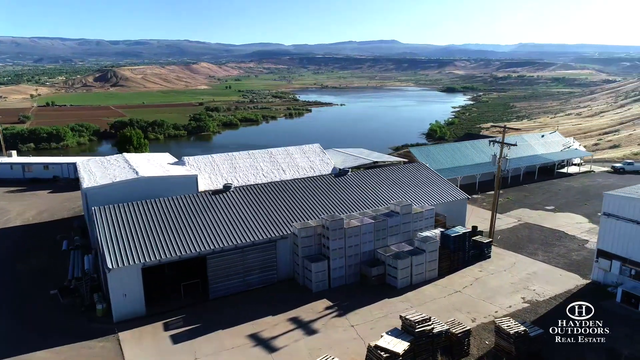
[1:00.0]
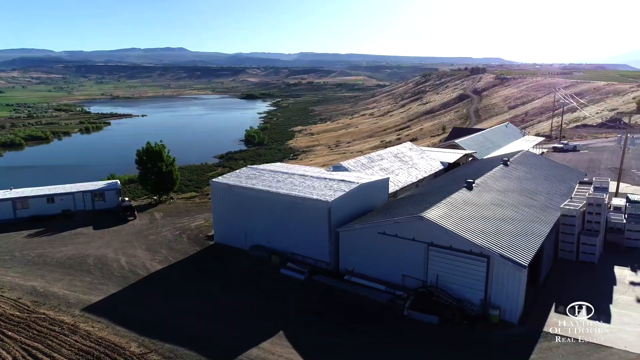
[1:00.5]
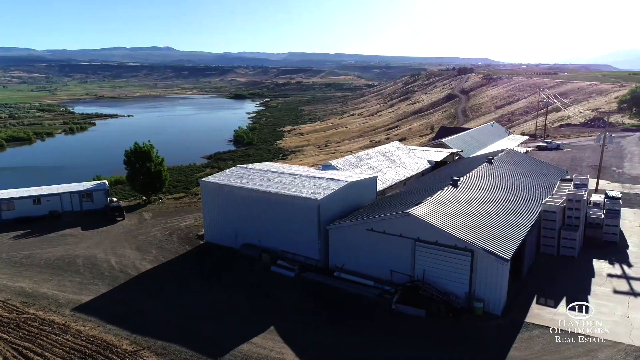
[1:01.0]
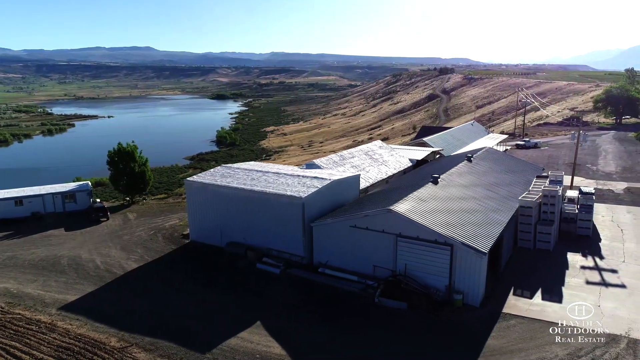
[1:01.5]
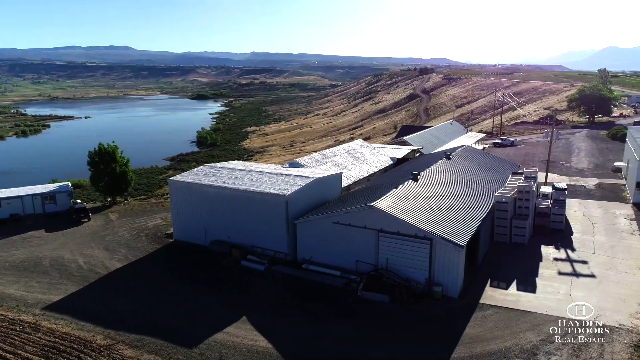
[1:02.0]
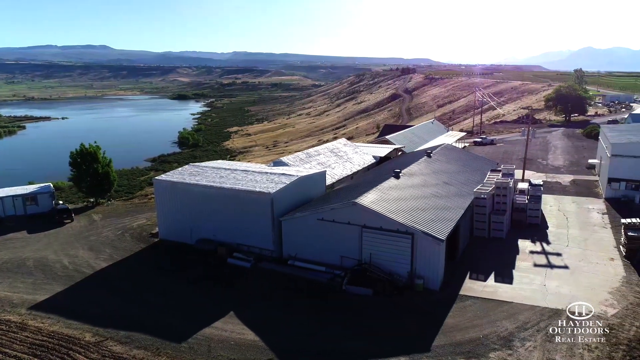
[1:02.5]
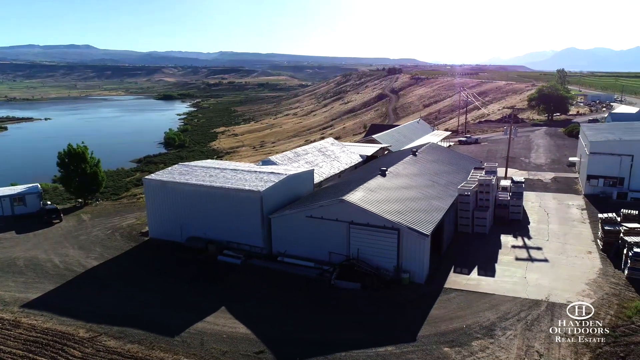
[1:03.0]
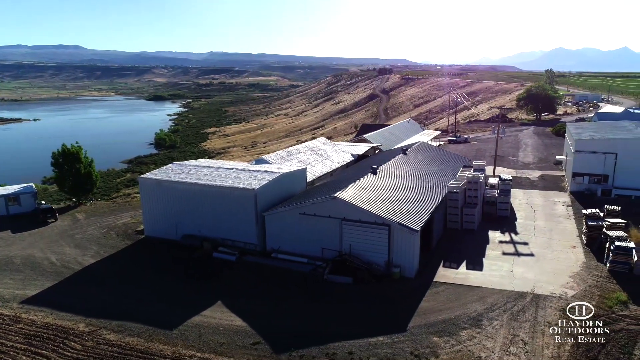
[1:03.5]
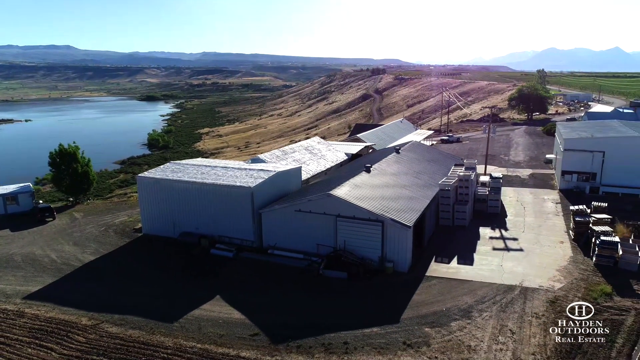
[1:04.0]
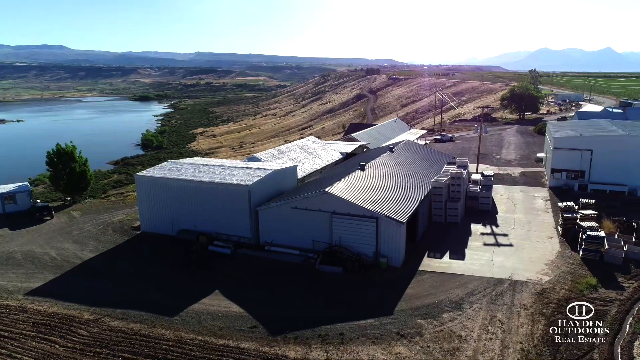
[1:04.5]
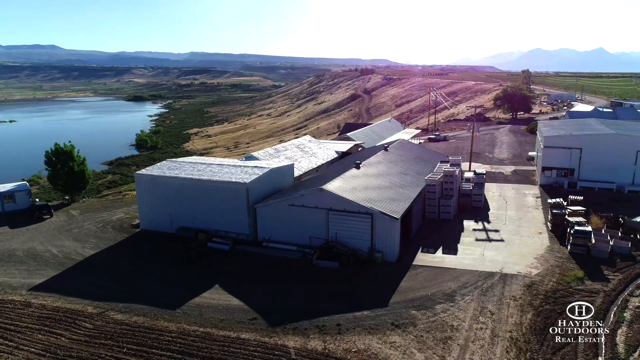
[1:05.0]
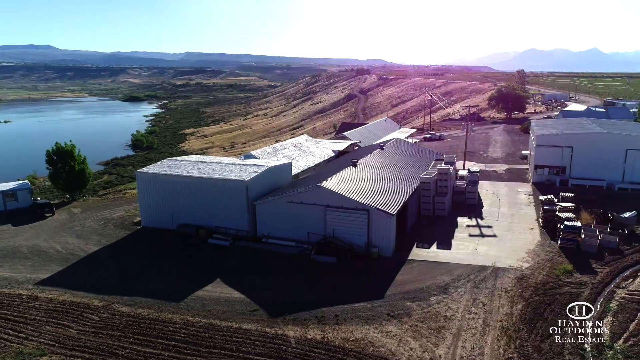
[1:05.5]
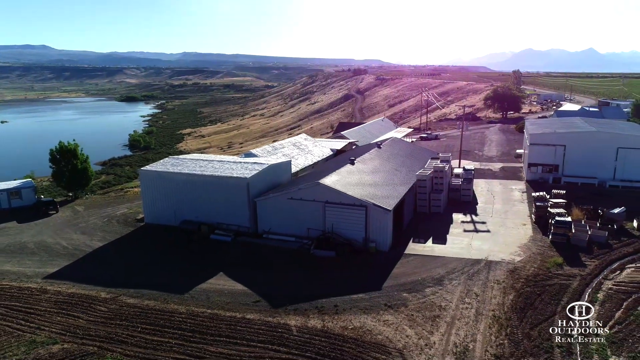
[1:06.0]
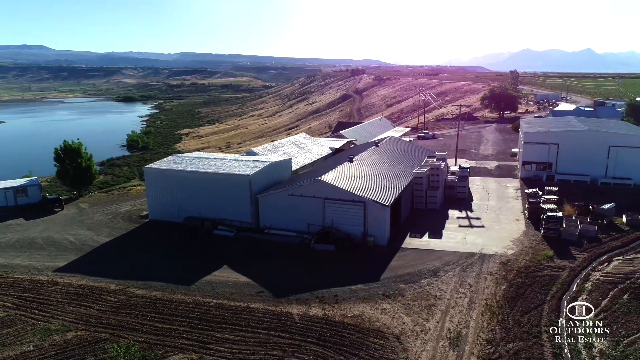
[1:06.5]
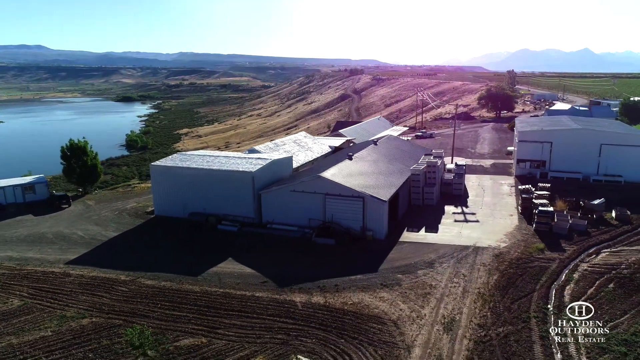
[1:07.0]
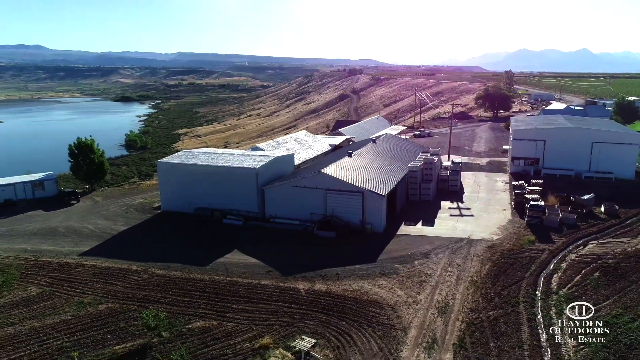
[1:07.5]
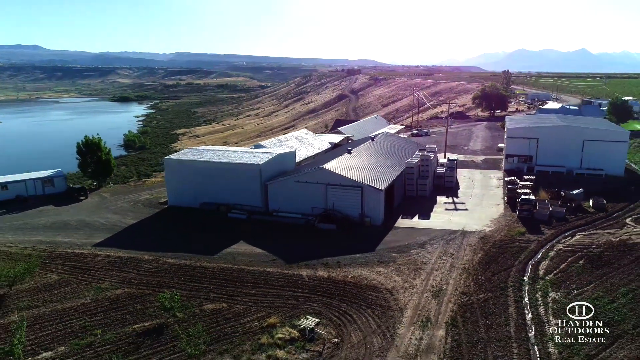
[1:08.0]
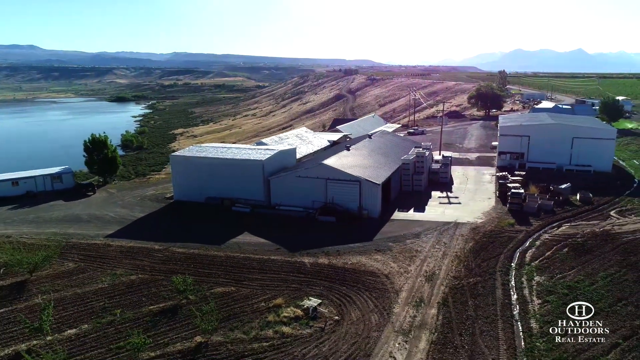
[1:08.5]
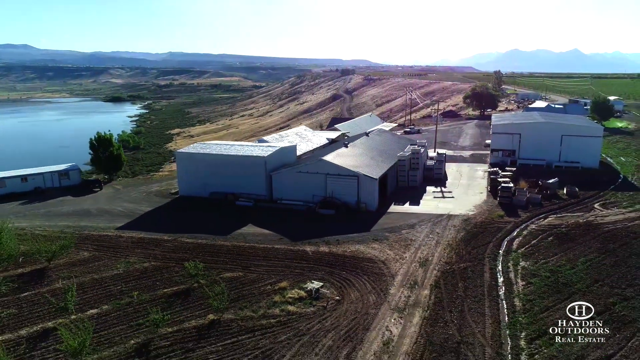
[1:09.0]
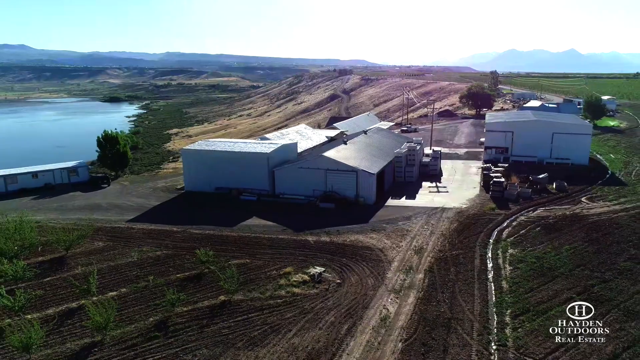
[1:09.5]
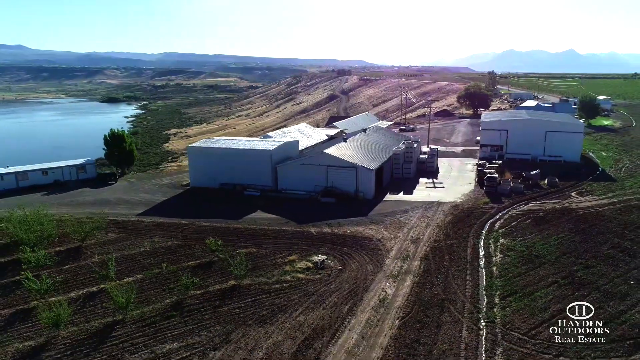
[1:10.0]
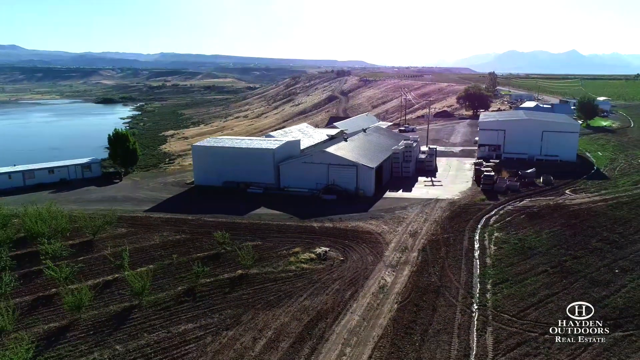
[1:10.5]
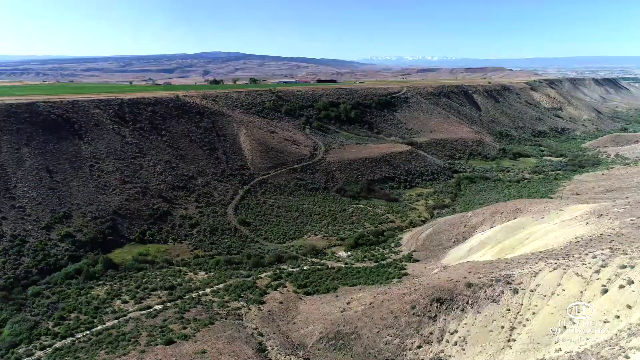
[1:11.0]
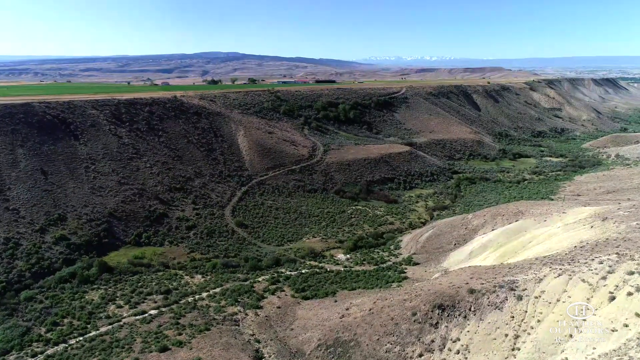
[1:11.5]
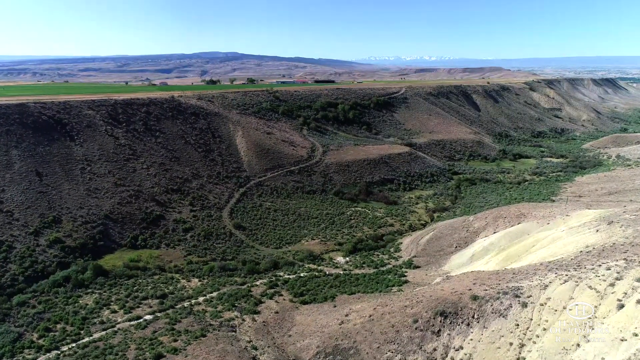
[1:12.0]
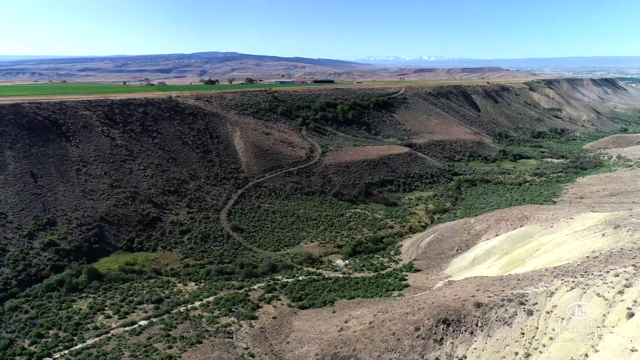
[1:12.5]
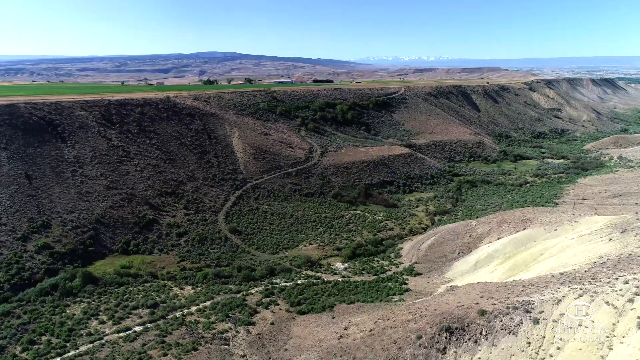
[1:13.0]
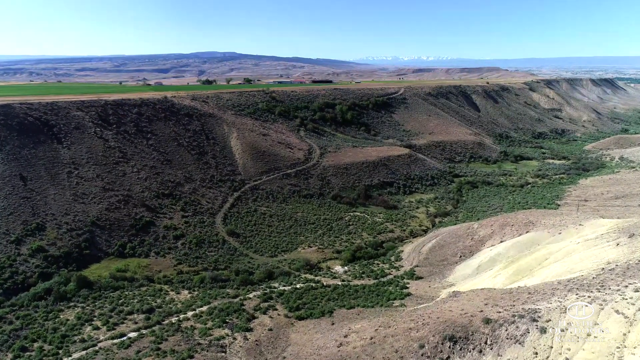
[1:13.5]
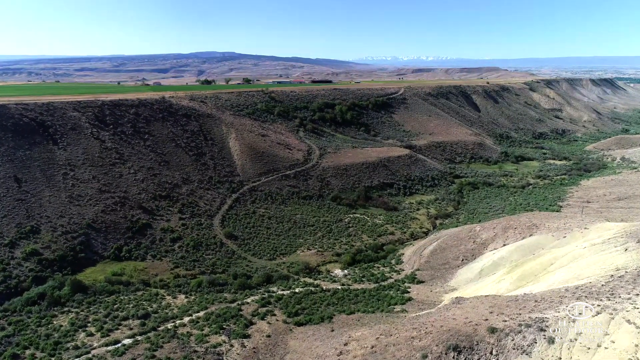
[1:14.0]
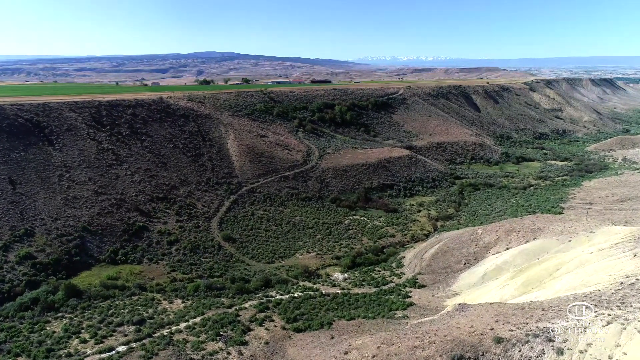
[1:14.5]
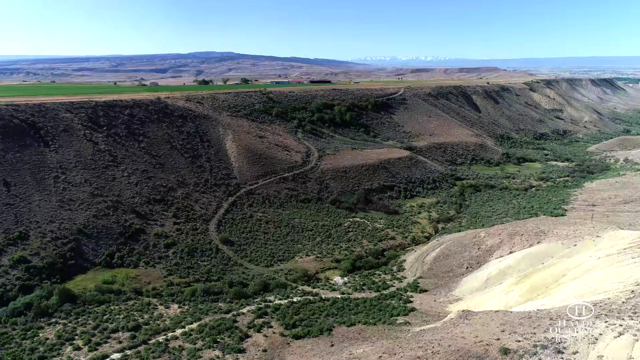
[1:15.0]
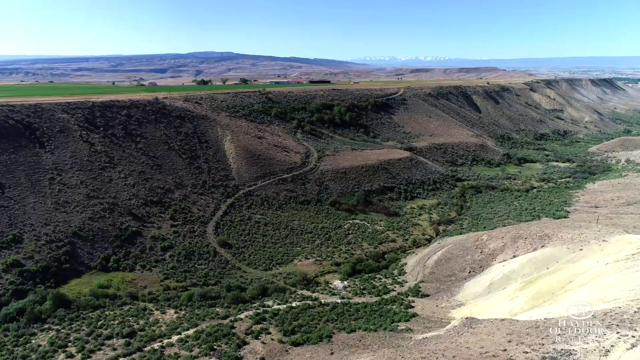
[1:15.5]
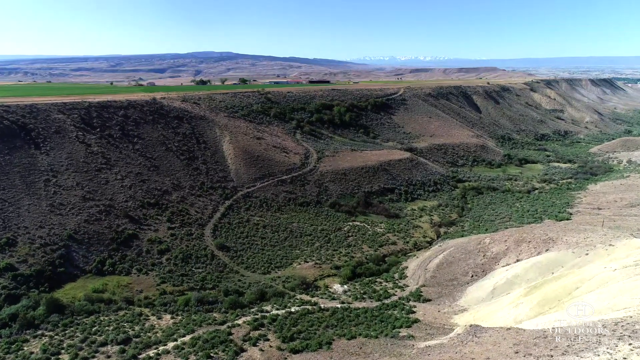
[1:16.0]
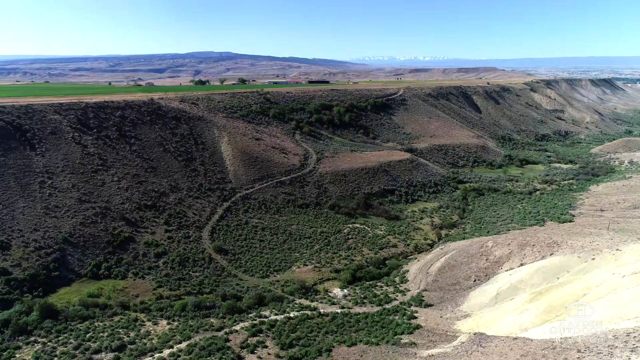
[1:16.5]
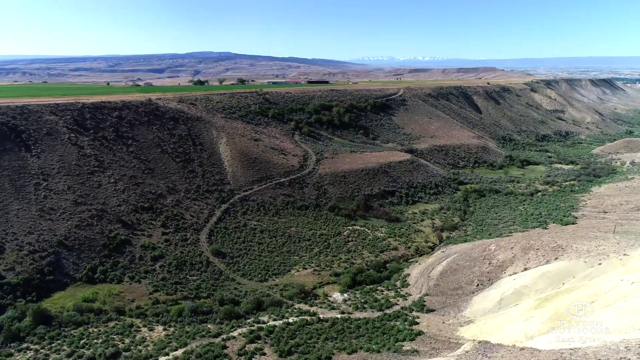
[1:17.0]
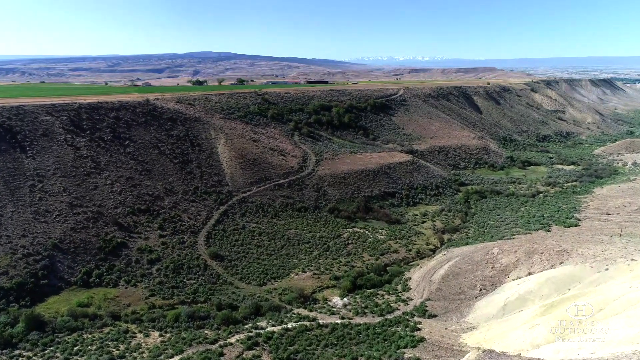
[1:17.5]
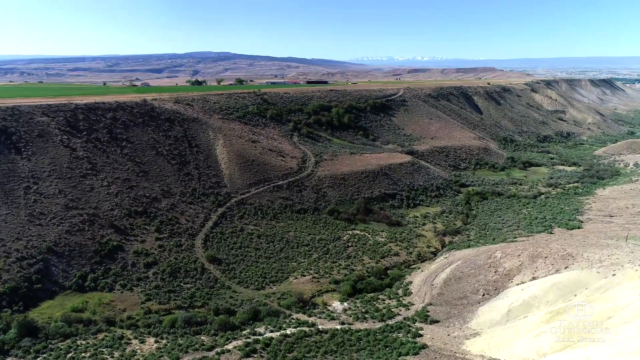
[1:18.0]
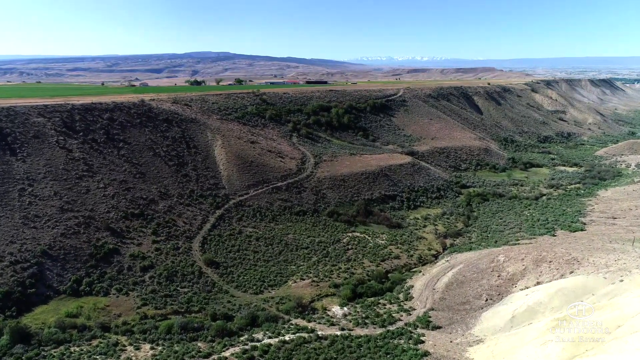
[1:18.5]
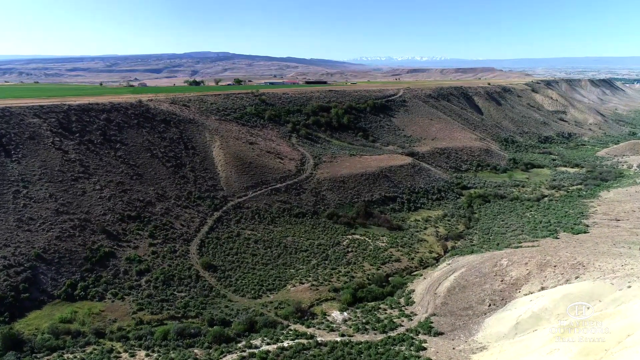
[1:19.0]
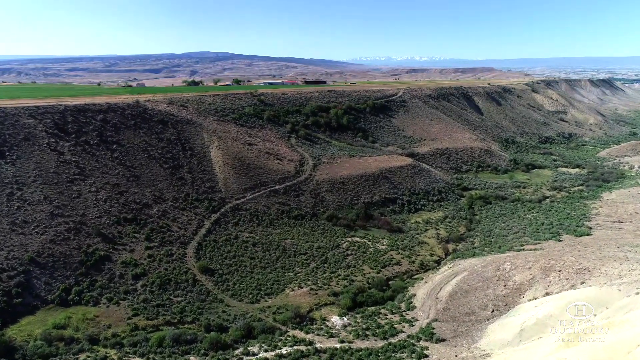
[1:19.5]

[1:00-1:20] More aerial shots show the property with the water and mountains in the background. The white Hayden Outdoors Real Estate logo stays in the bottom right corner. Another shot shows more hills with a little dirt trail curving around the natural curvature of the land. The farm-work, industrial side of the property comes into view, with things stacked outside a building. In the last shot there almost seem to be white snow-capped mountains far in the distance.